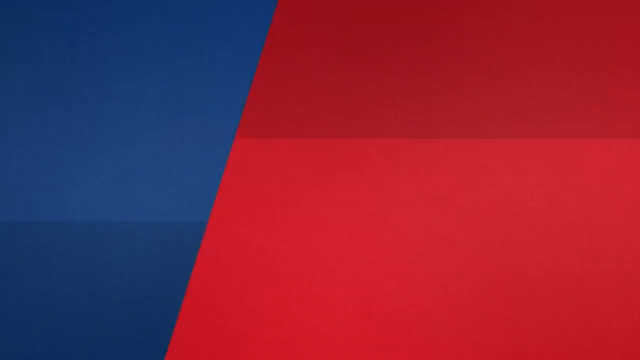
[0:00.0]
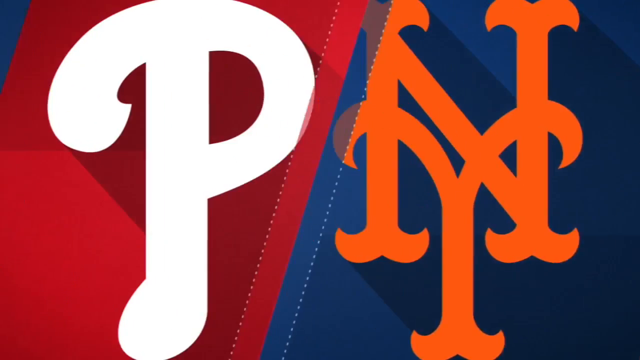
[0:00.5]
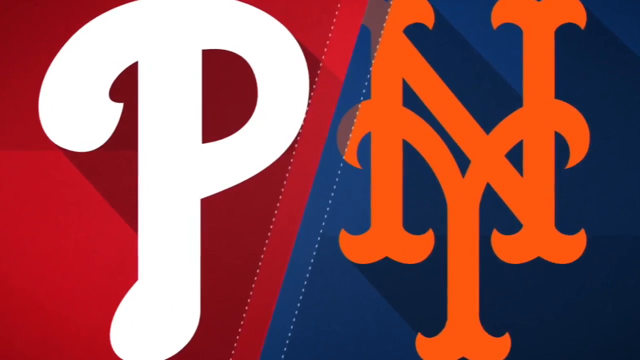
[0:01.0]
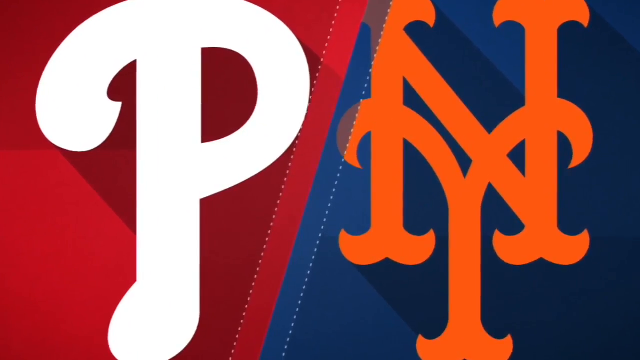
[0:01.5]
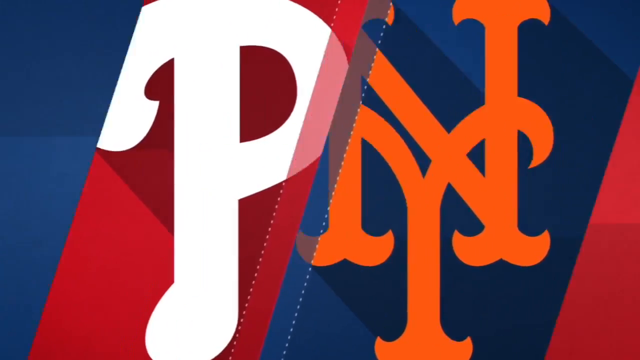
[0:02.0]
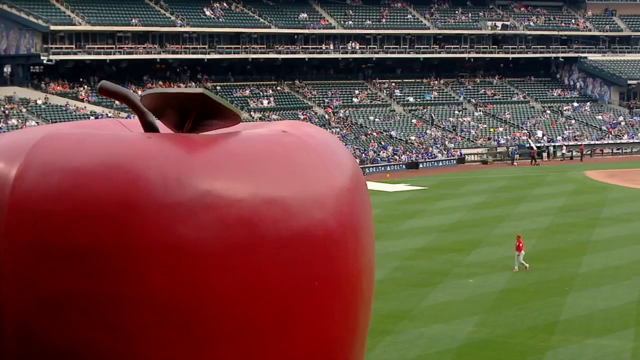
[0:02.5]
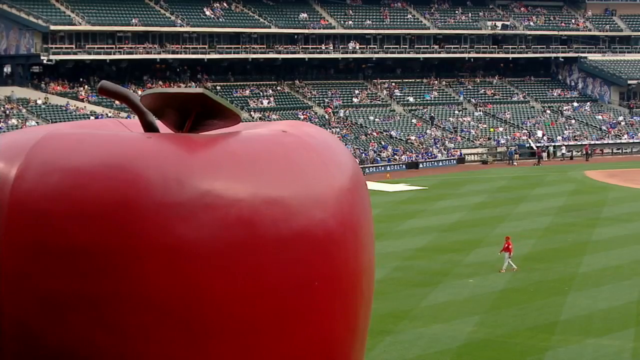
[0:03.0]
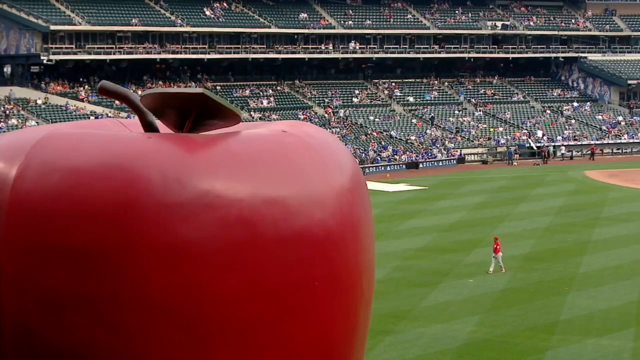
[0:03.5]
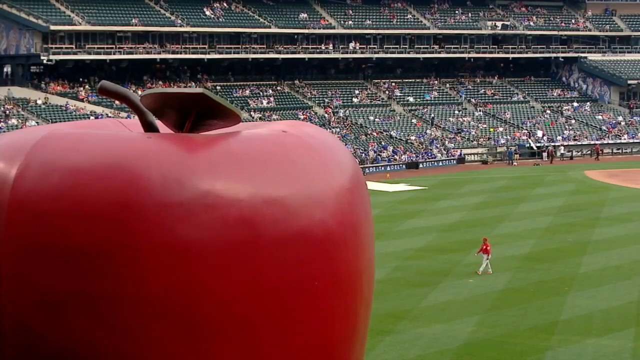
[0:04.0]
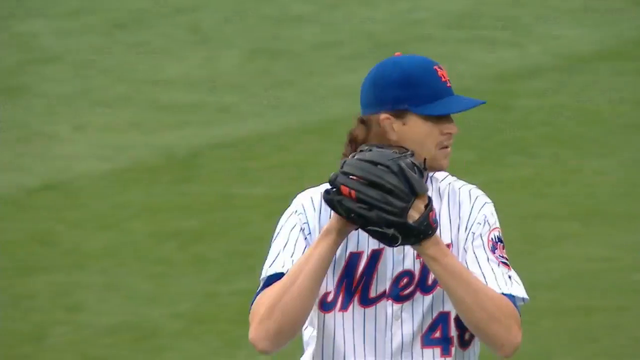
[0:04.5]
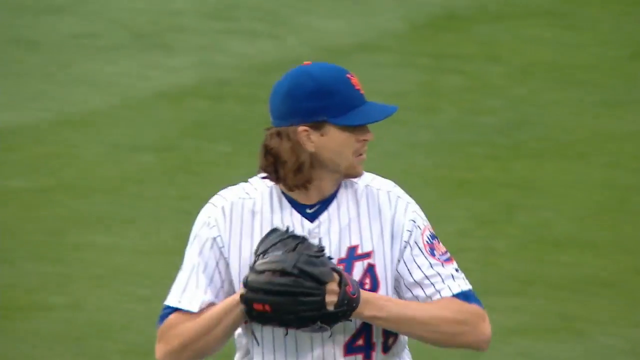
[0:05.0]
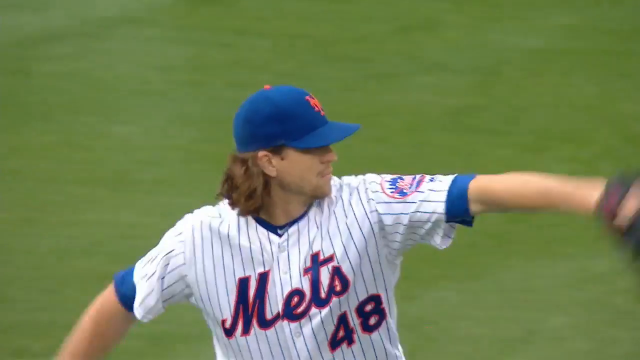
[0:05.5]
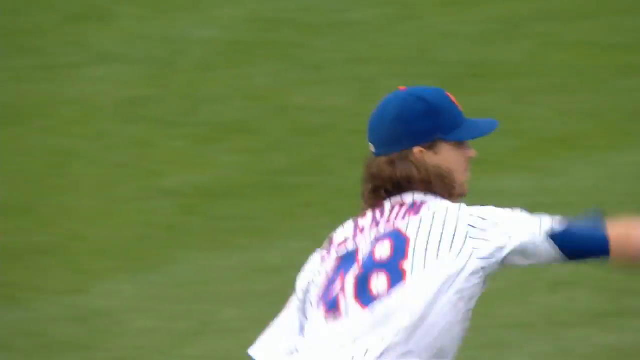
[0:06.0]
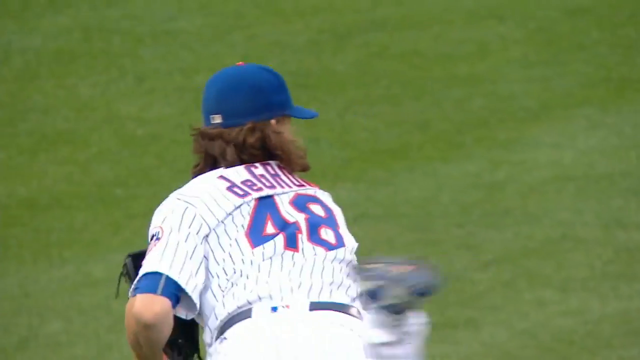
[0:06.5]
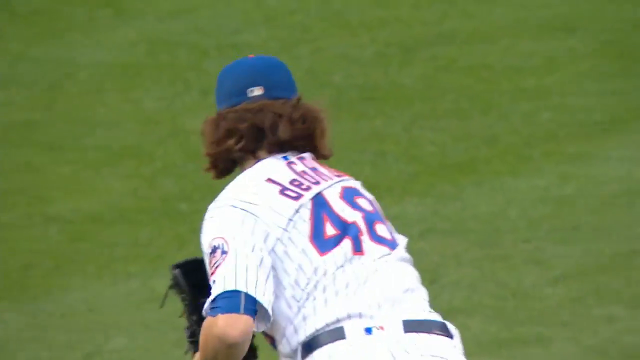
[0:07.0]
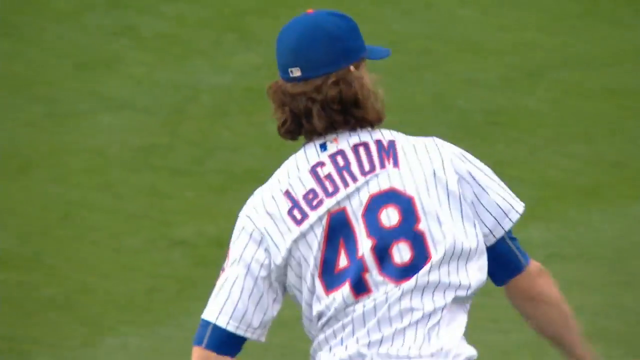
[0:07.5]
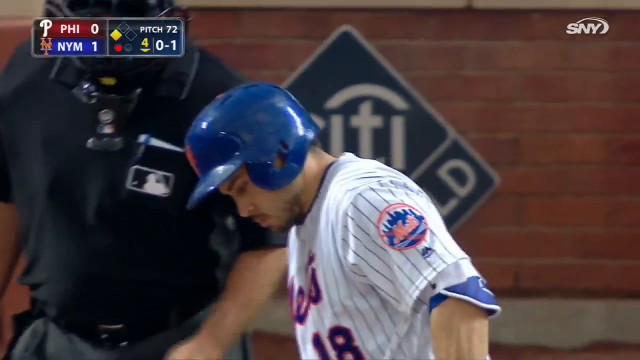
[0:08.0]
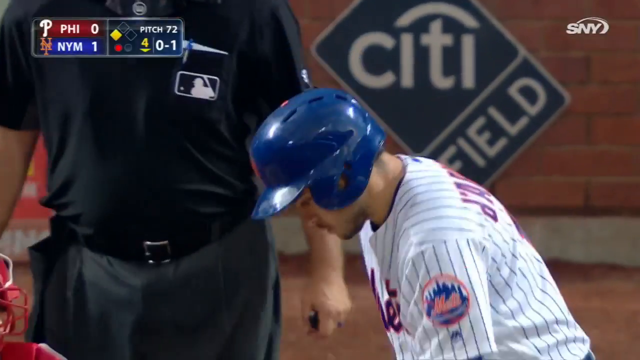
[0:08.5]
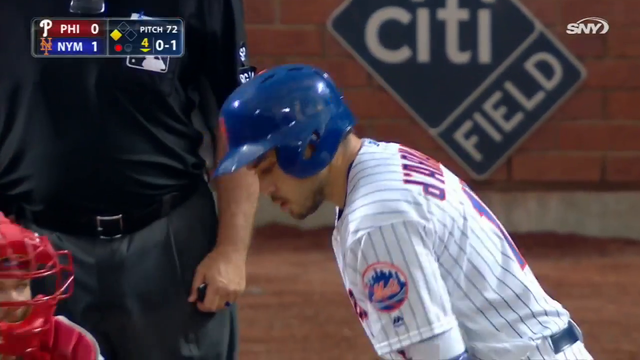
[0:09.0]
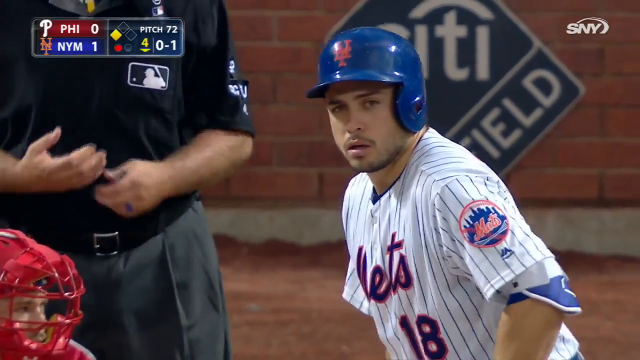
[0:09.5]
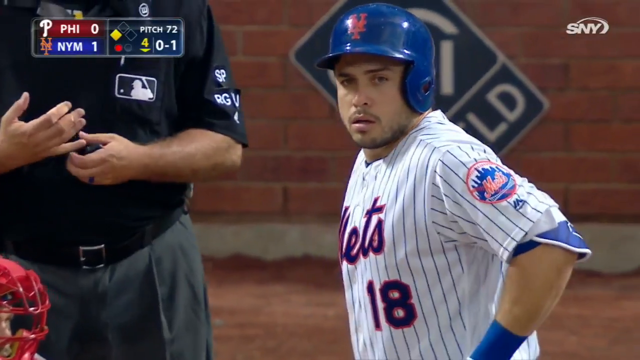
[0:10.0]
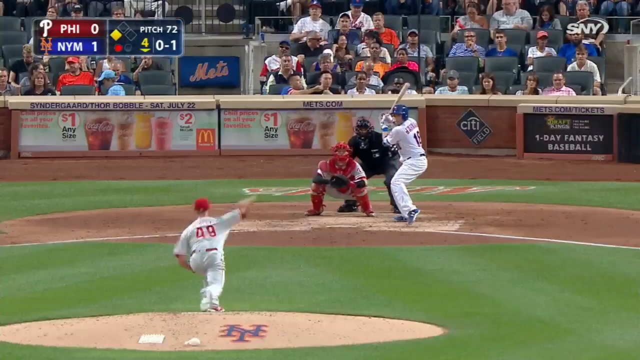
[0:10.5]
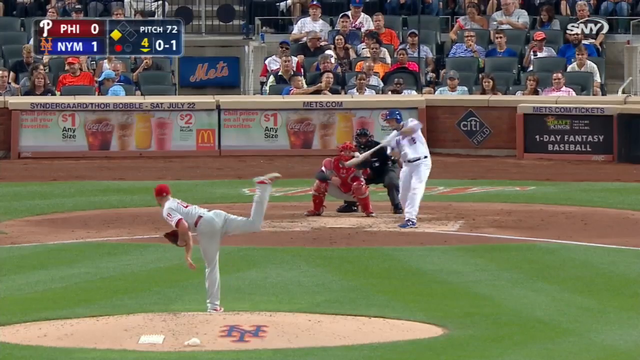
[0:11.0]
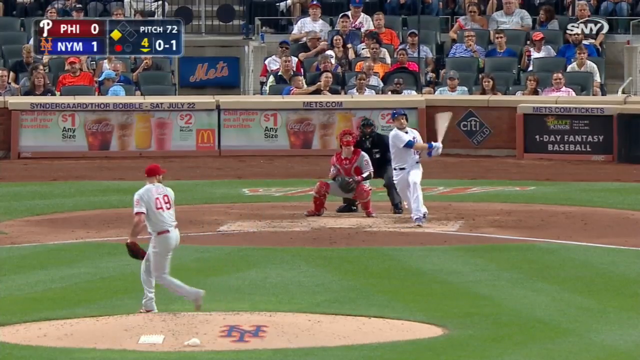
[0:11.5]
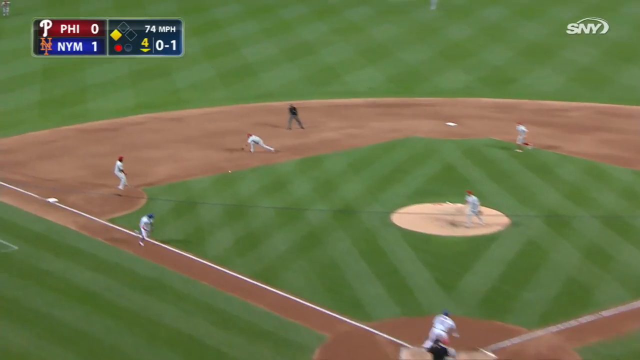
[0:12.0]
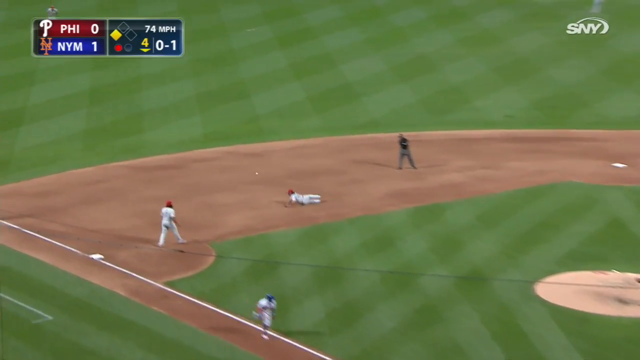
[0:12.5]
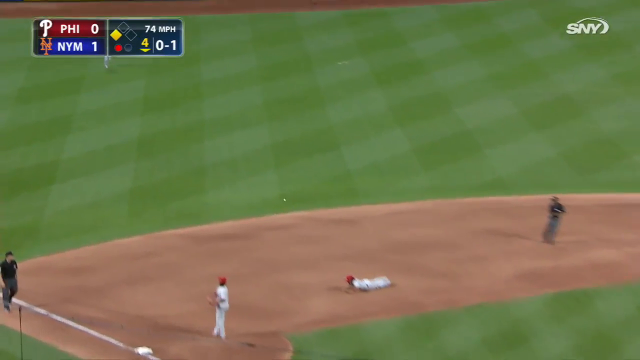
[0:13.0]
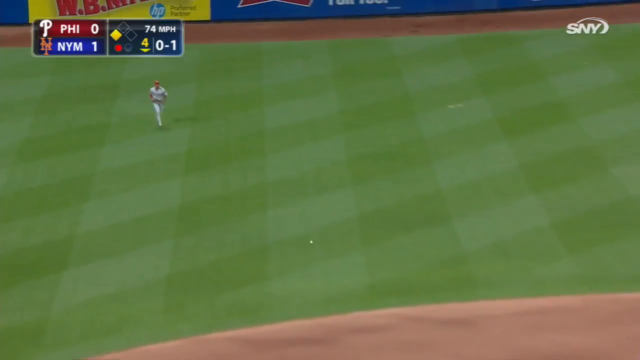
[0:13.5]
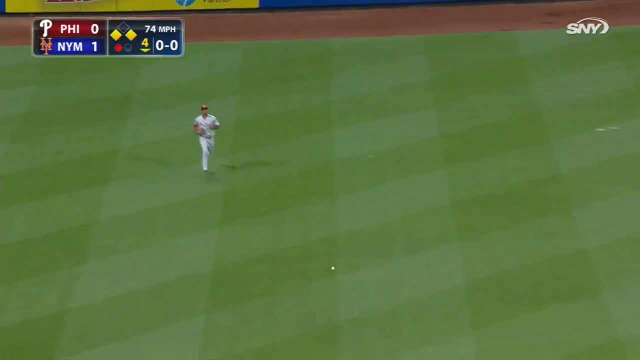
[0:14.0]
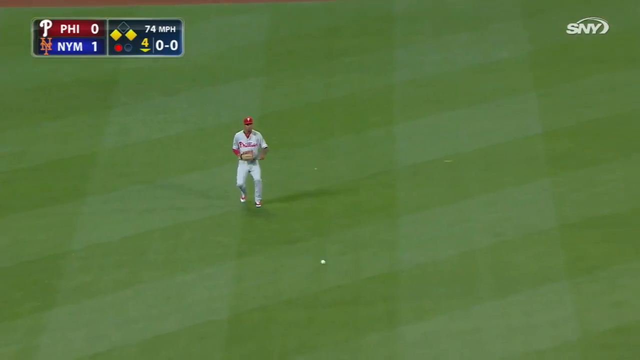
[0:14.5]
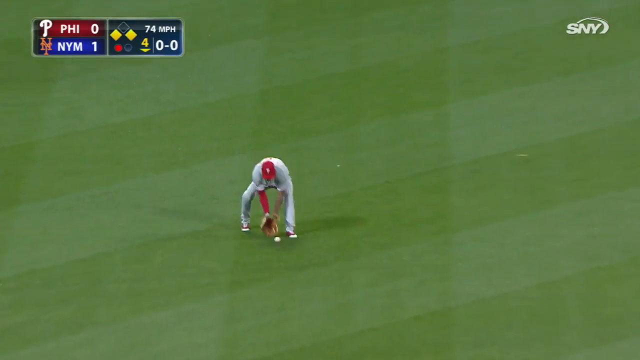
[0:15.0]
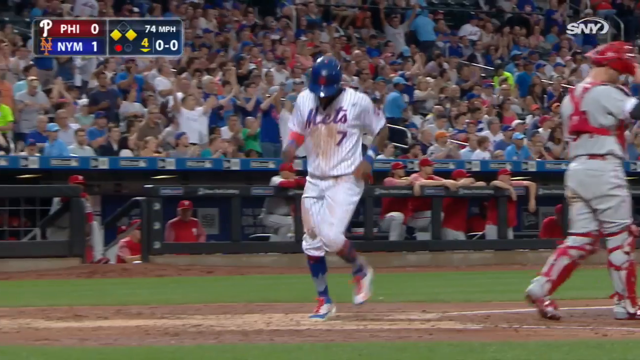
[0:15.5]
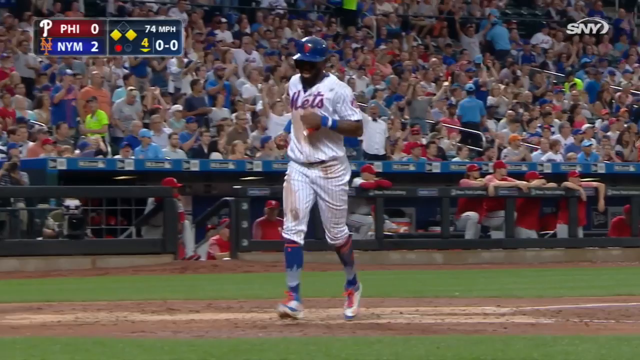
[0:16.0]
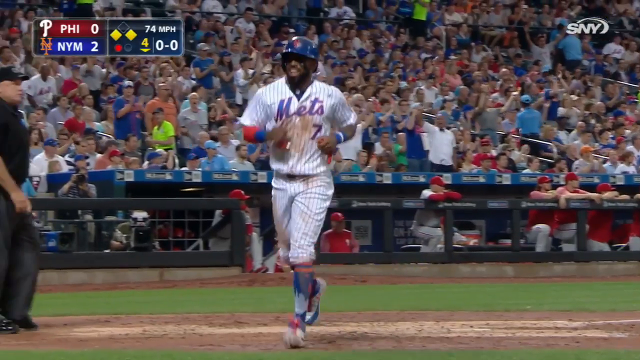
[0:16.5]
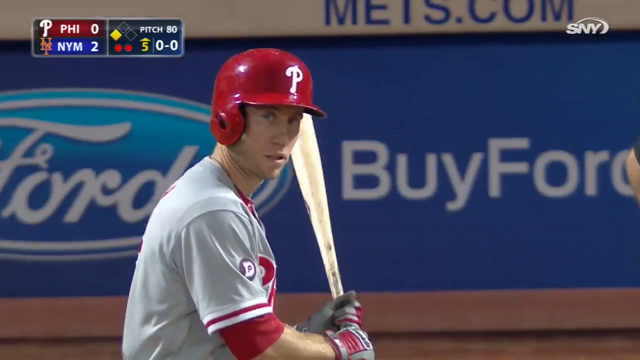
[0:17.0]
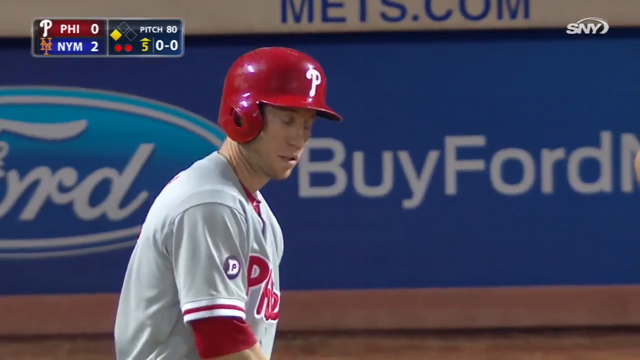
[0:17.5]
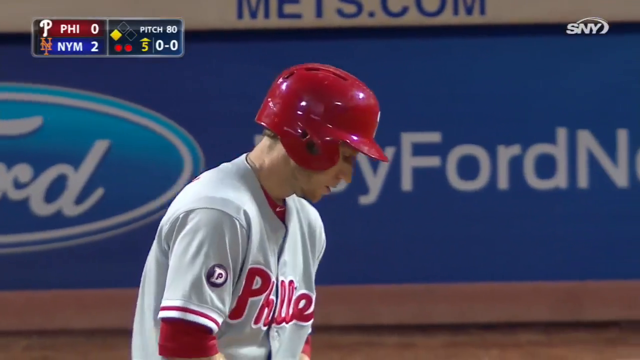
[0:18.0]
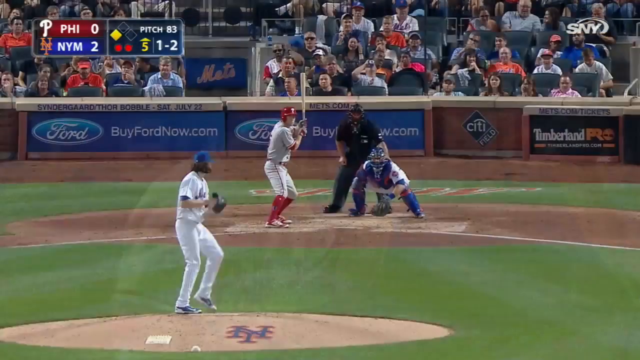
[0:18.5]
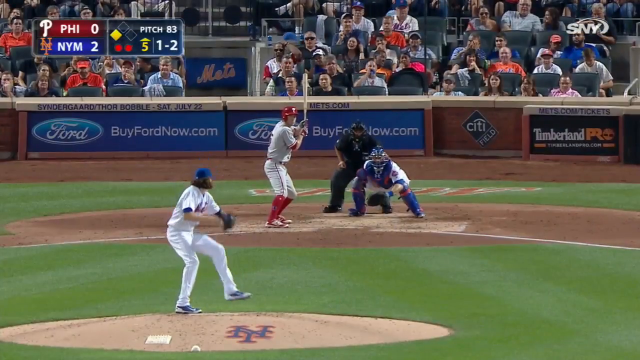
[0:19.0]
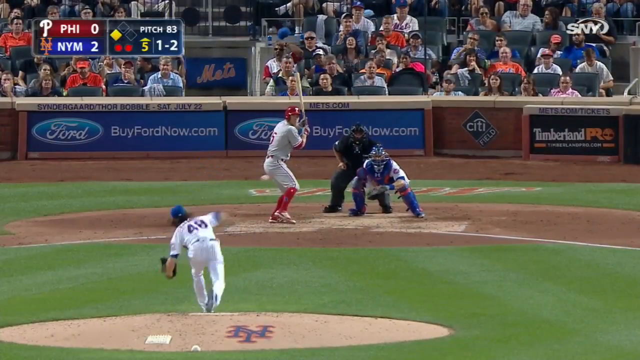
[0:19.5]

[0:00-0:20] The video opens with the logos of the Phillies baseball team and the New York Mets, before a baseball game. It then shows footage behind one of the apples, perhaps at the Mets stadium, followed by shots of players warming up and of the game in progress. A new player comes up to bat while the Phillies are pitching. The Mets batter hits the ball into left field, where it skids and is eventually grabbed by a Phillies outfielder. The footage seems to be a series of game clips, and the Mets are up 2-0. Next, a Mets pitcher pitches to a Phillies batter, and the segment cuts off there. The video is perhaps a set of game highlights.